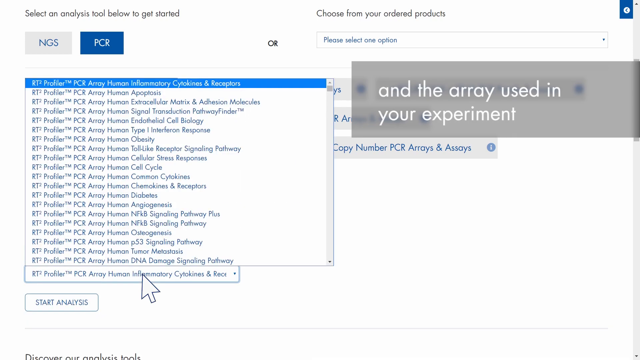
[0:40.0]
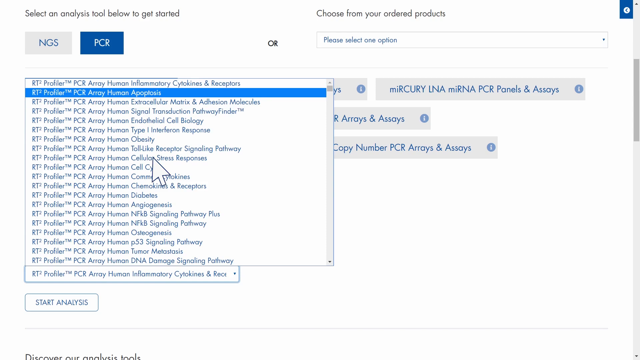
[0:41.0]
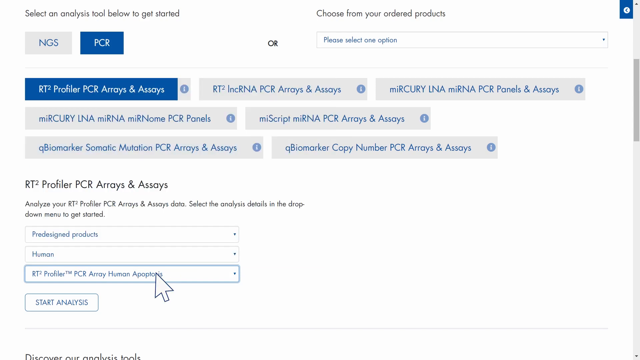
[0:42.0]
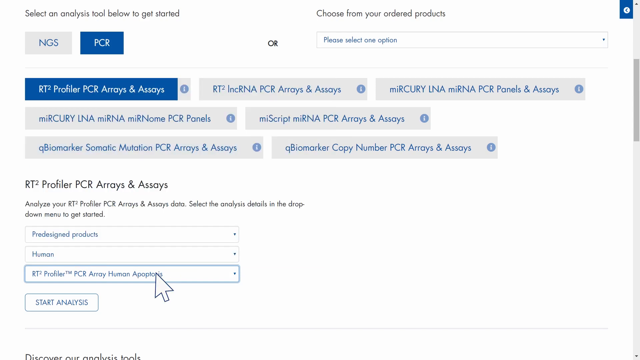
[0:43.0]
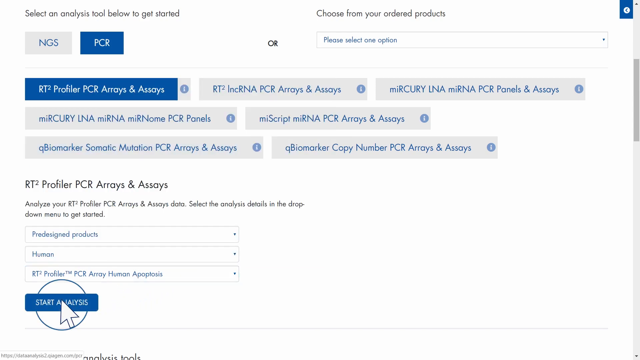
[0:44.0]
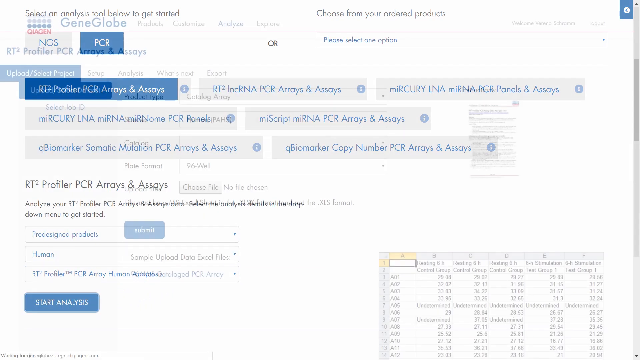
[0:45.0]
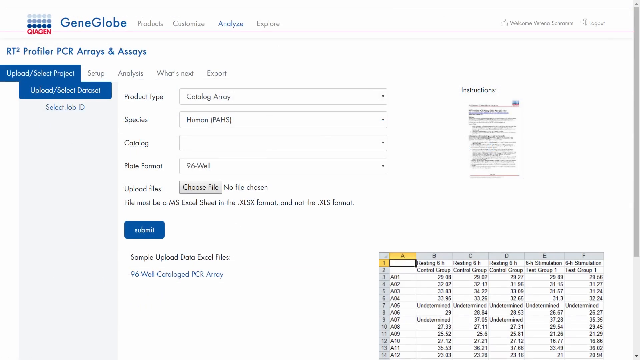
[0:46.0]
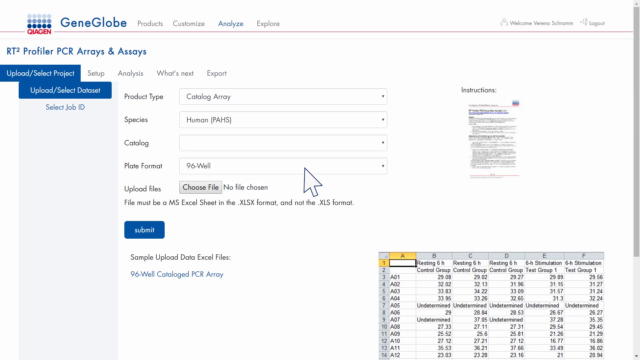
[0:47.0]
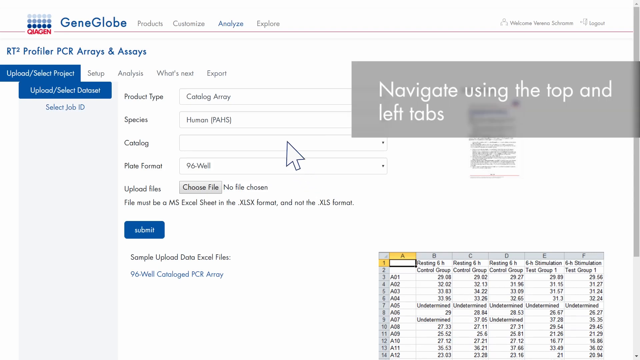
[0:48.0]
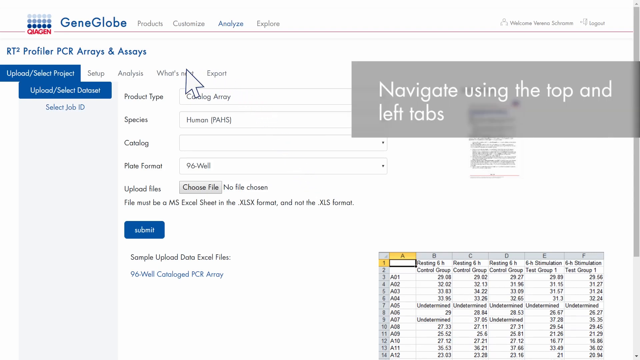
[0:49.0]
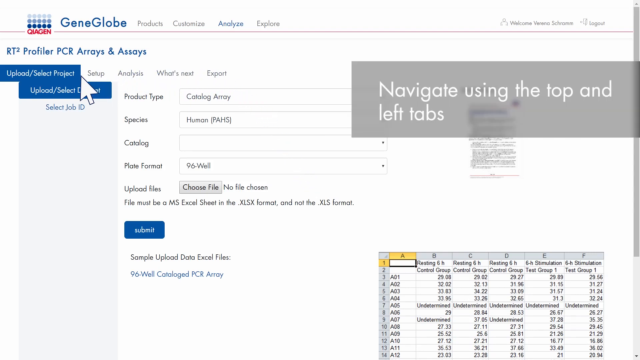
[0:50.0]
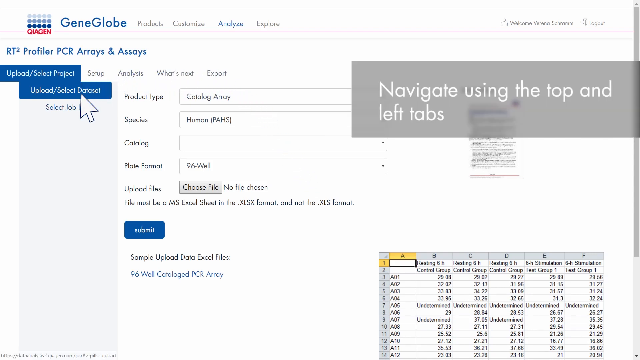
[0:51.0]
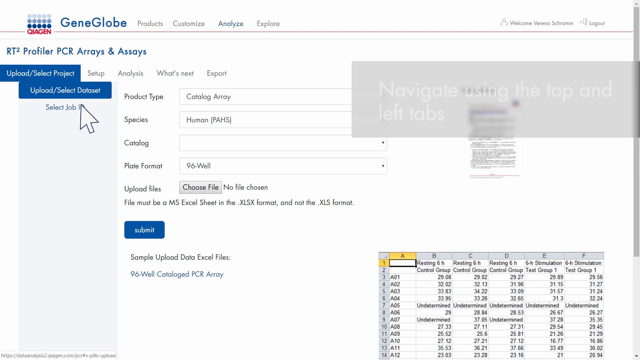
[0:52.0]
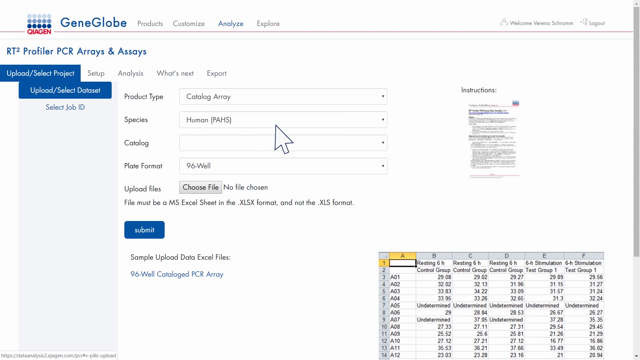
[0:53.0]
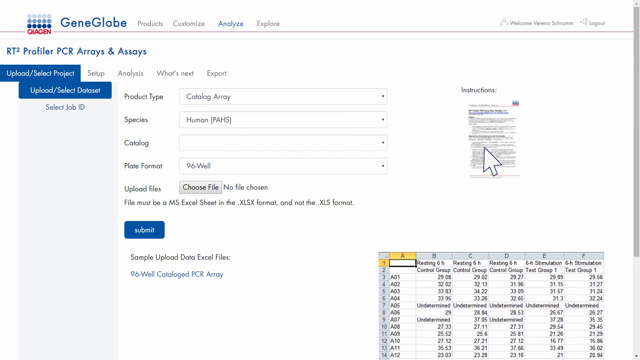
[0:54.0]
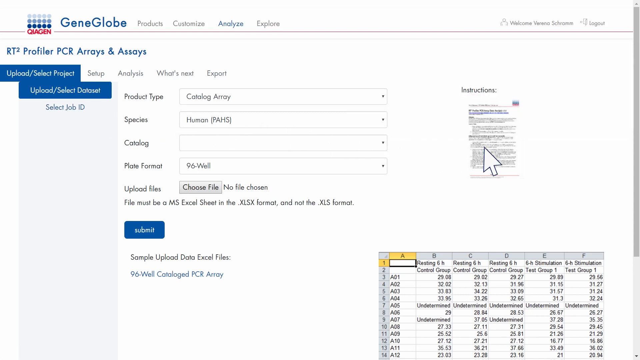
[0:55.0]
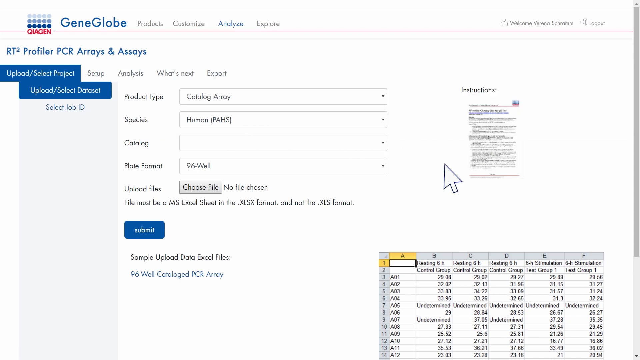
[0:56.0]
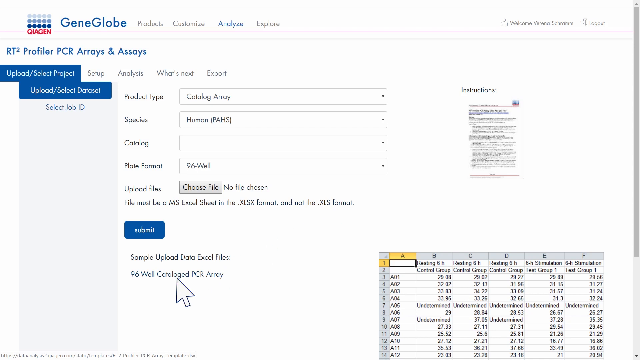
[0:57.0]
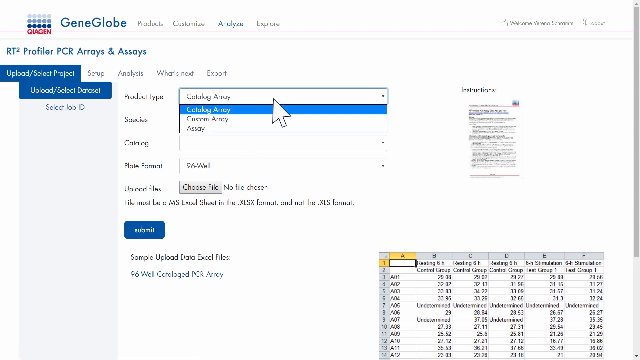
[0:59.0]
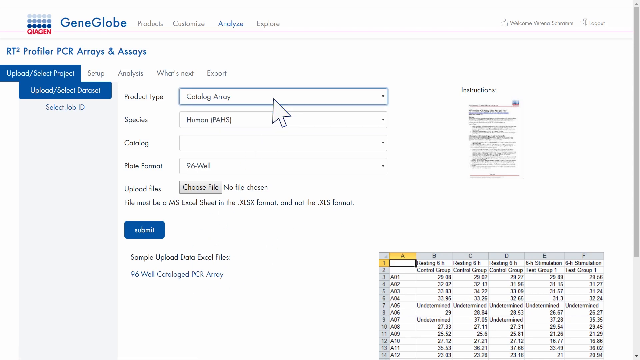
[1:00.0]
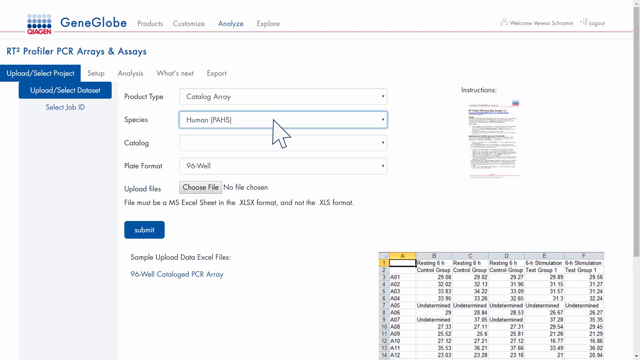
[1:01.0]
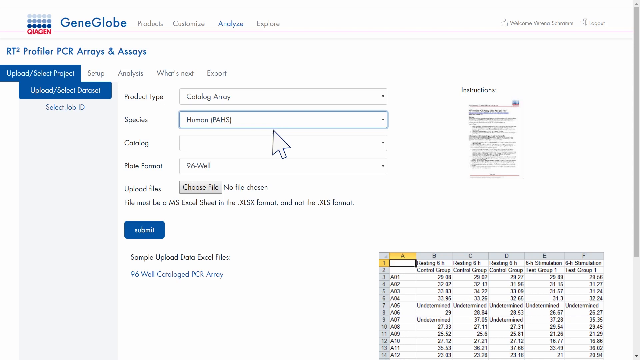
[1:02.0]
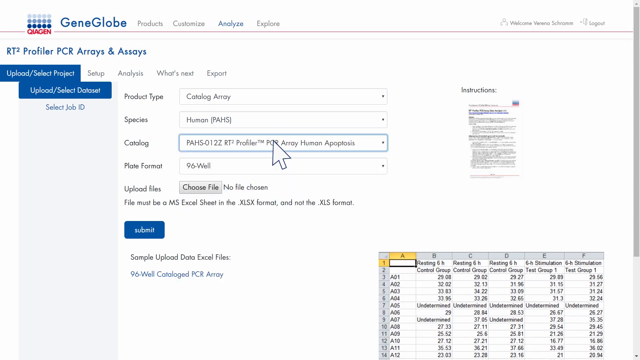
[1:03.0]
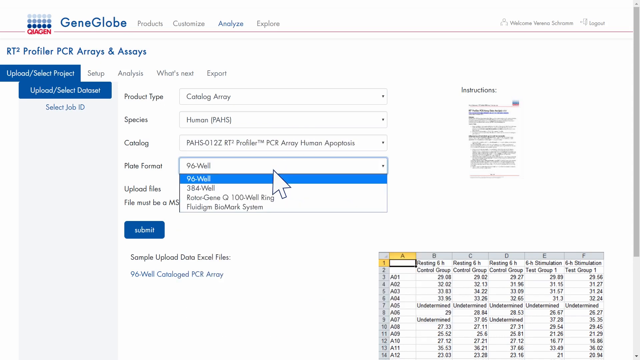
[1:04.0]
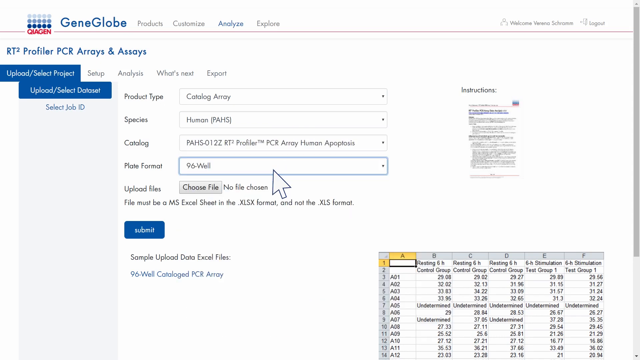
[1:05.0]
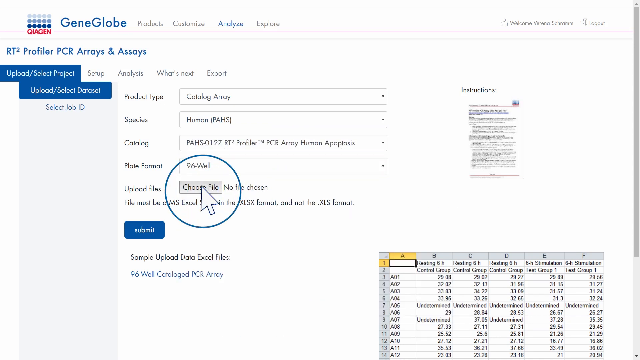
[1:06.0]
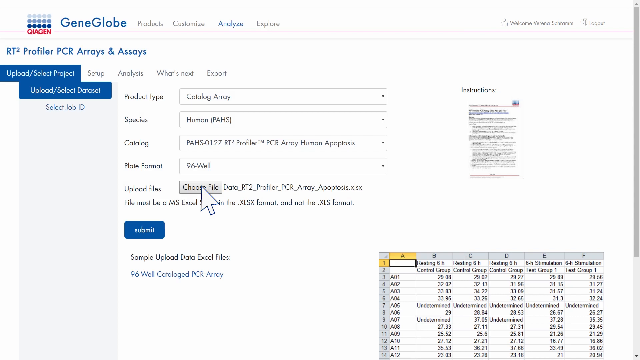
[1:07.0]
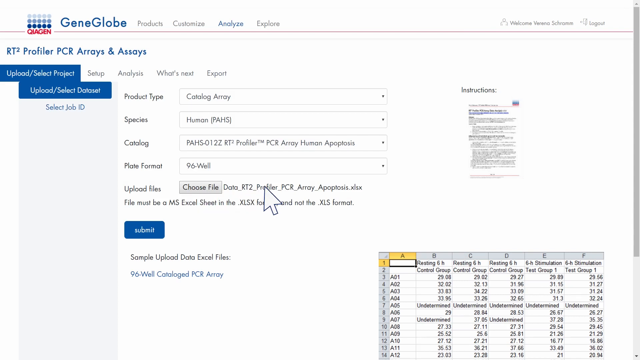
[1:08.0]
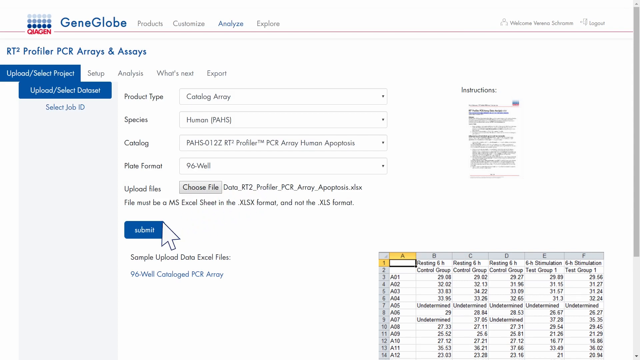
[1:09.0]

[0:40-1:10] The page shows multiple options for starting an analysis. At the top it says "select an analysis tool below to get started", and PCR is chosen. On the right it says "choose your preferred products", and nothing is chosen there. At the bottom is a list of options to choose from, all RT-profile PCR arrays, including "RT-profile PCR array human inflammatory cytokines and receptors", "RT-profile PCR array human apoptosis", "RT-profile PCR array human extracellular matrix and adhesion molecules", "RT-profile PCR array human signal transduction pathway finder", "RT-profile PCR array human endothelial cell biology", "RT-profile PCR array human obesity", "RT-profile PCR array human cellular stress responses", "RT-profile PCR array human cell cycle", "RT-profile PCR array human common cytokines", "RT-profile PCR array human chemokines and receptors", "RT-profile PCR array human diabetes" and "RT-profile PCR array human NFKB signaling pathway plus".